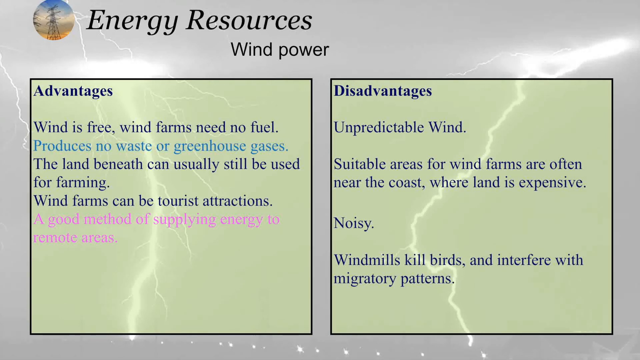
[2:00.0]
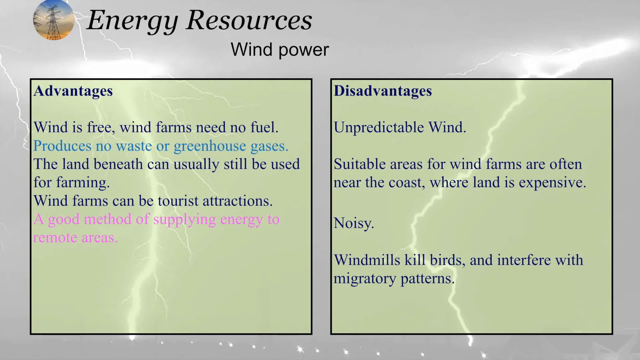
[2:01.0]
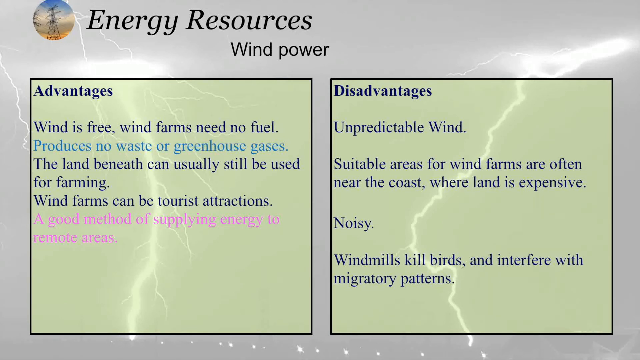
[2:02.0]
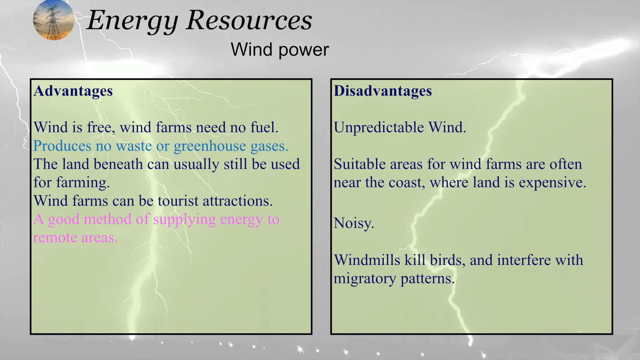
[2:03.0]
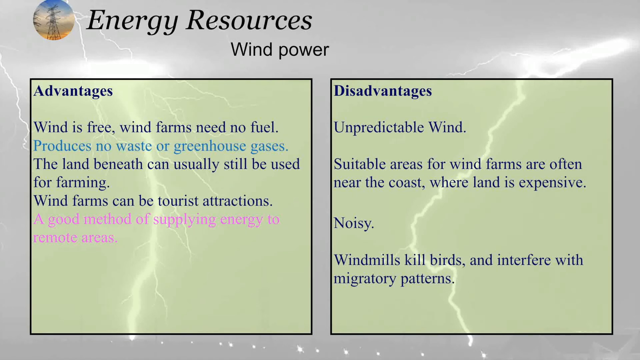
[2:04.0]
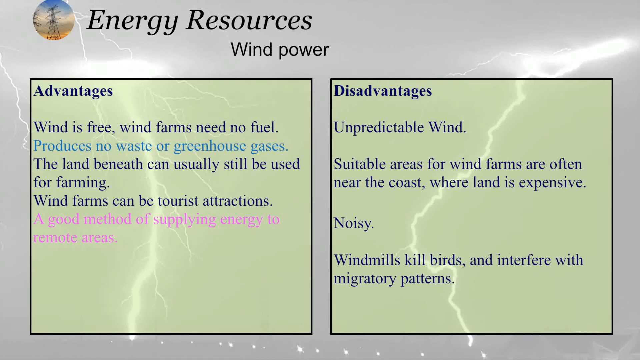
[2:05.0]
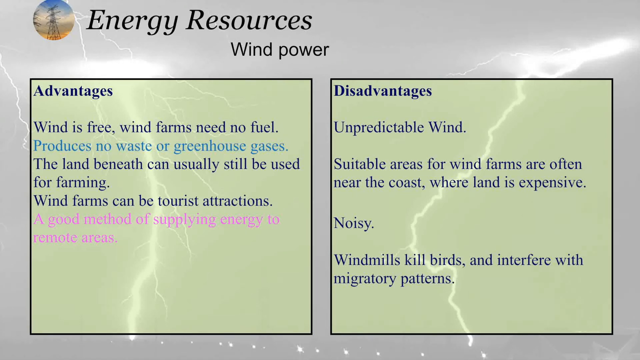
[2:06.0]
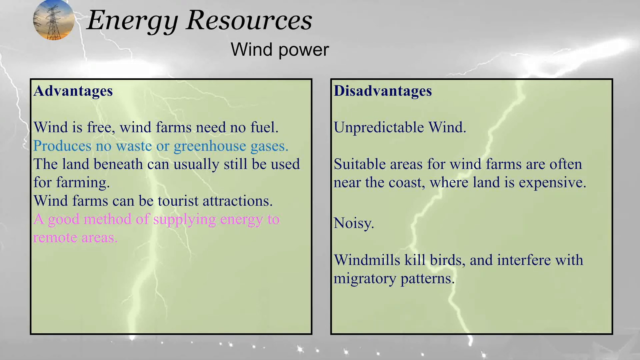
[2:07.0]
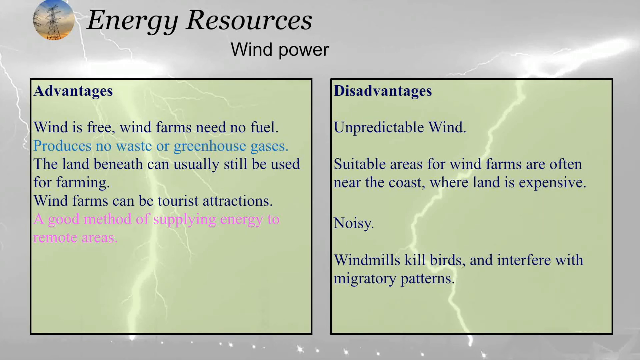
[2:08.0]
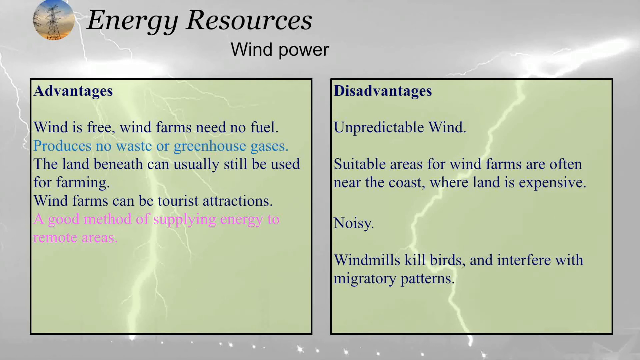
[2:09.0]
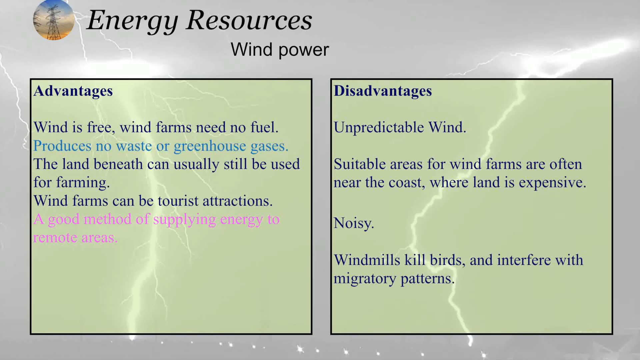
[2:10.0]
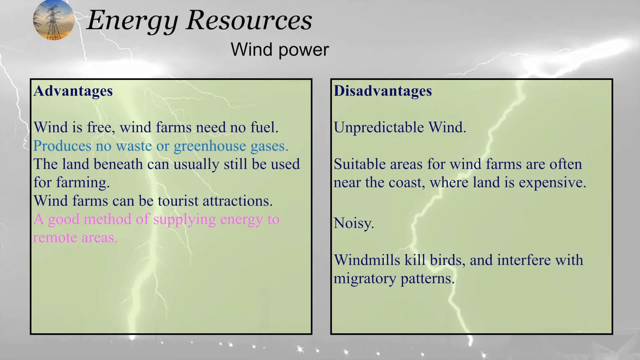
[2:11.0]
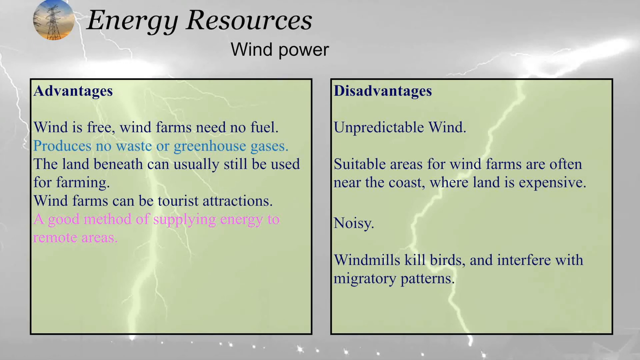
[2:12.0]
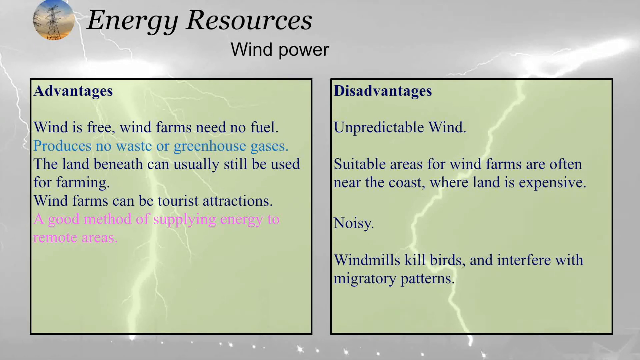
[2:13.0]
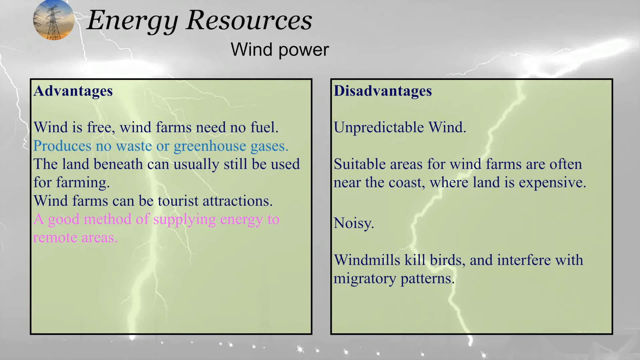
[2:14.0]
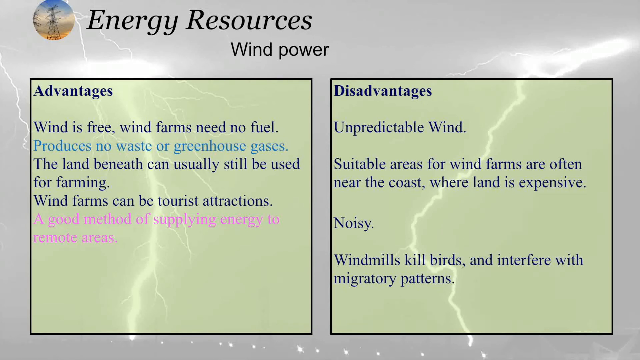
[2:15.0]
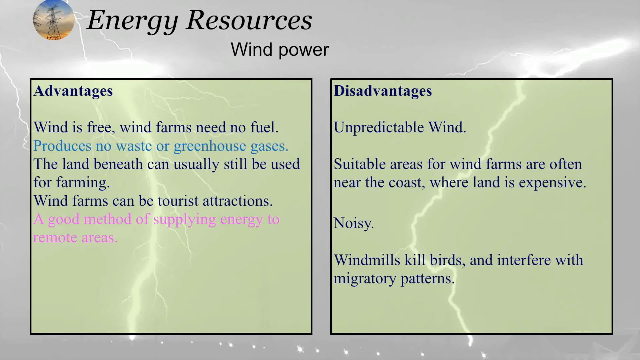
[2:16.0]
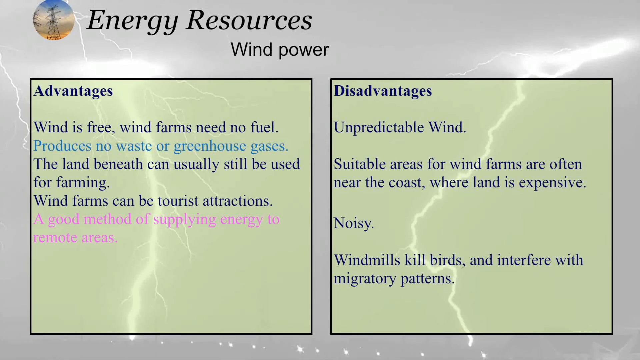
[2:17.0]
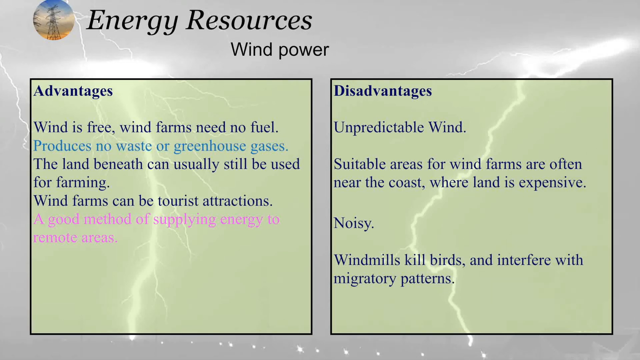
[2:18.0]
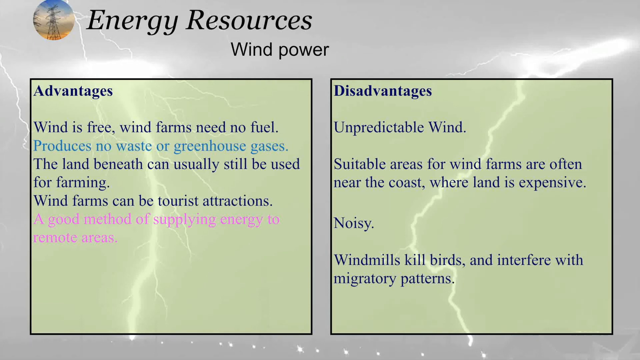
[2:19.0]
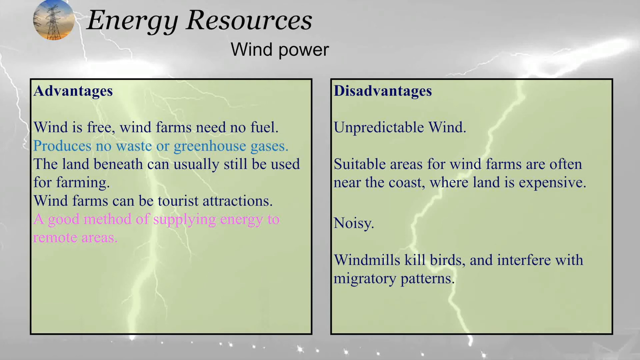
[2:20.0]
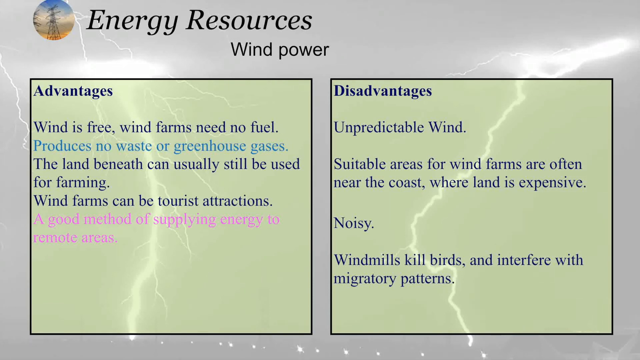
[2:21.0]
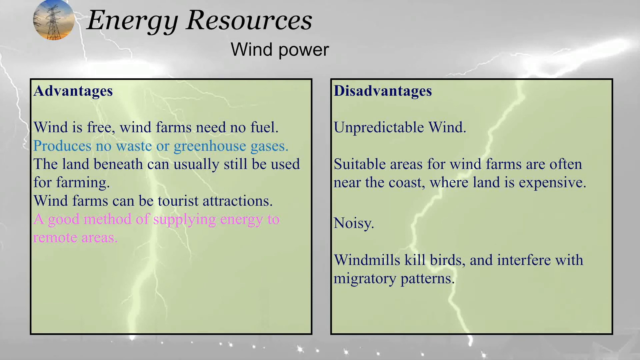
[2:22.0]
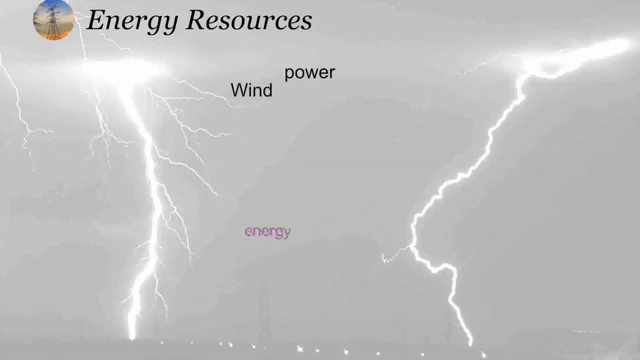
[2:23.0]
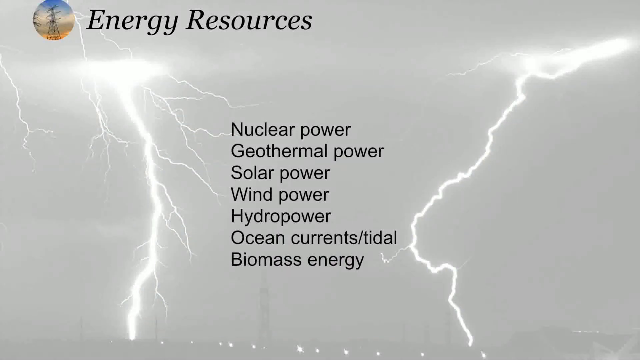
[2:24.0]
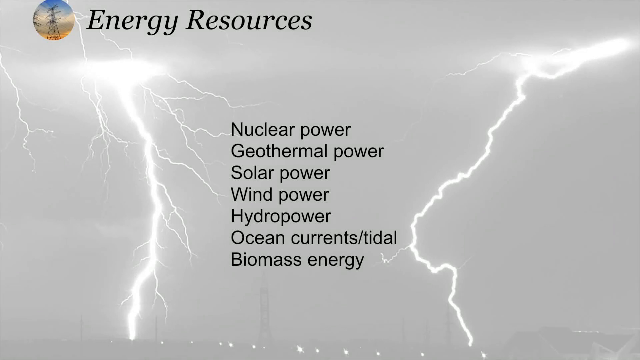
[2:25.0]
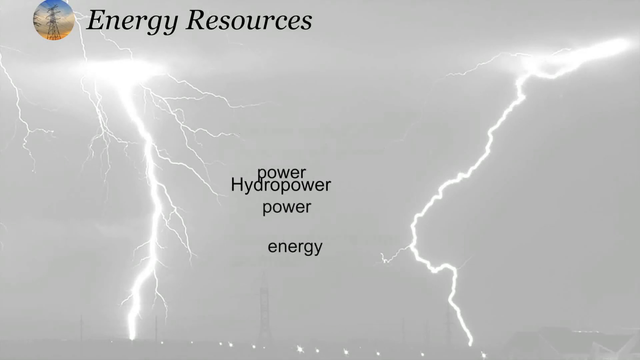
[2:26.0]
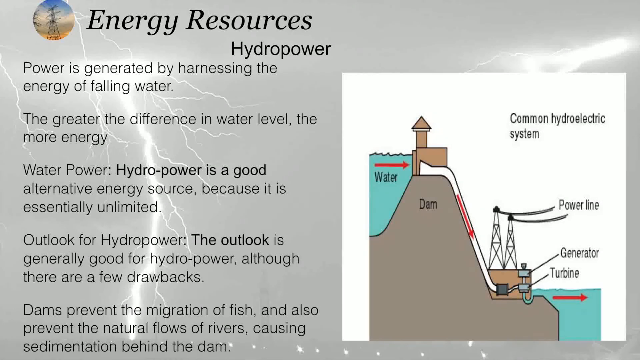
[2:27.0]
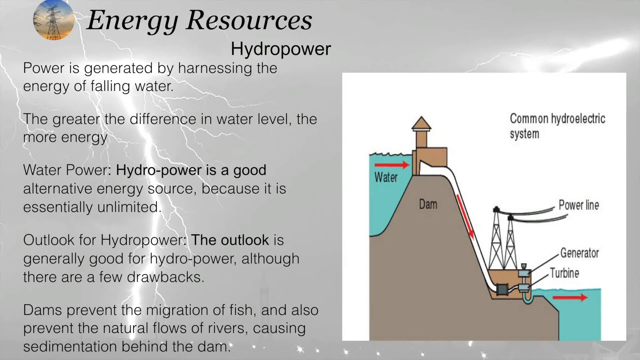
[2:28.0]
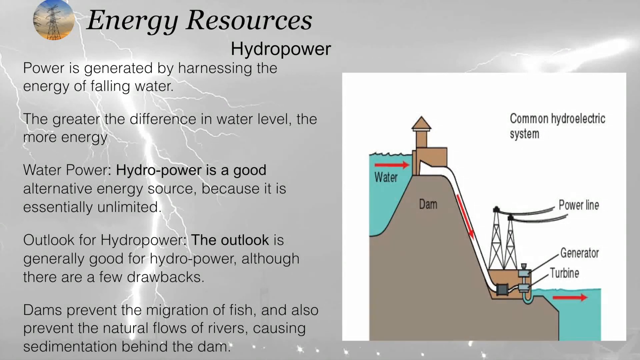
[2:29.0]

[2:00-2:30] The same gray sky background has lightning on the left and right, with "energy resources" across the top left and the profile icon picture to its left. Two big square boxes have black borders and green insides, with the lightning visible through them. Advantages are on the left, five of them listed, and disadvantages on the right, four of them listed. The video then goes to a gray background and back to the first part, with "energy resources" across the top, the profile picture to its left, and the gray sky with lightning on the left and right. In the center, black lettering lists "nuclear power," "geothermal power," "solar power," "wind power," "hydropower," "ocean current / tidal," and "biomass energy." Some of the letters then shift around, and underneath "resources" it now says "hydropower" instead of "wind power." Five sections give different information about hydropower. On the left side is a diagram showing how hydropower works: a slanted hill with blue water at the top left, a building with a drain that comes off above the dam below it, and water running down the left that hits a generator turbine, which spins and makes the power line work. There is more water in the bottom right corner.